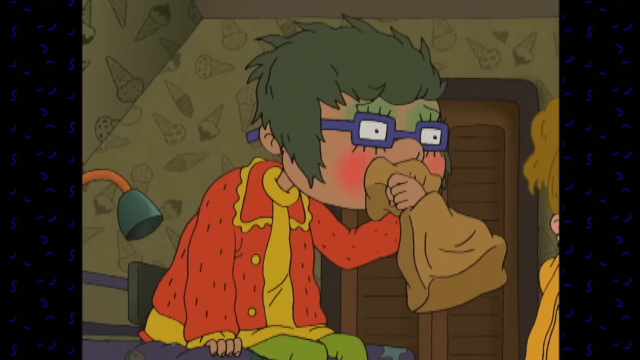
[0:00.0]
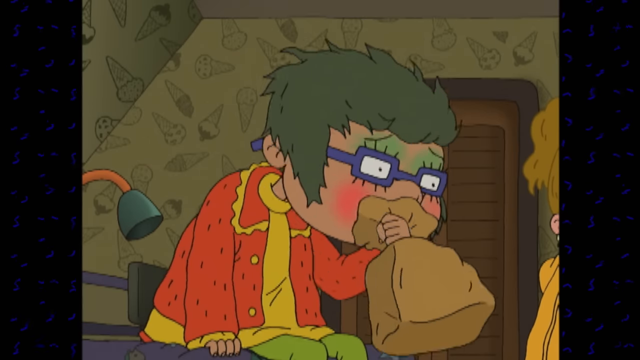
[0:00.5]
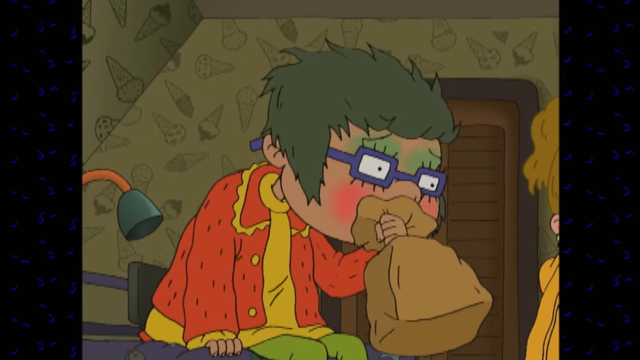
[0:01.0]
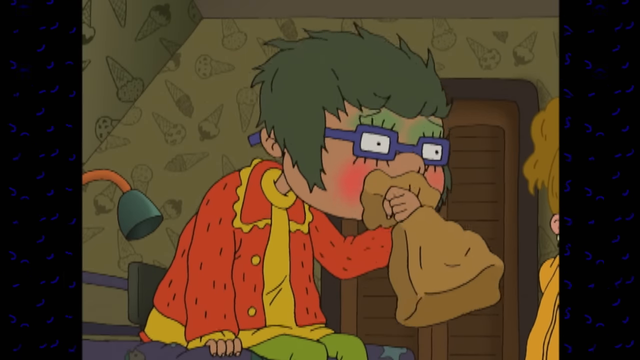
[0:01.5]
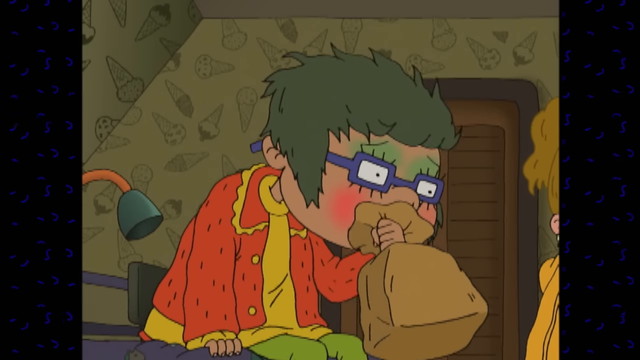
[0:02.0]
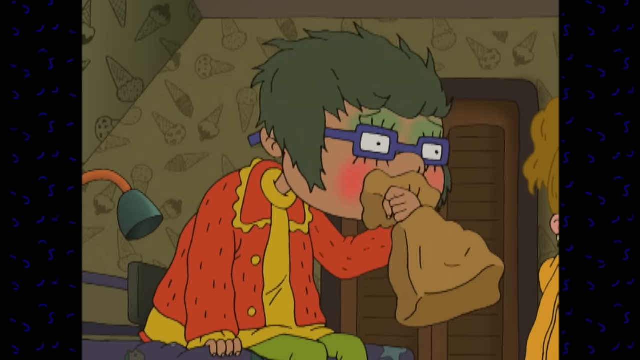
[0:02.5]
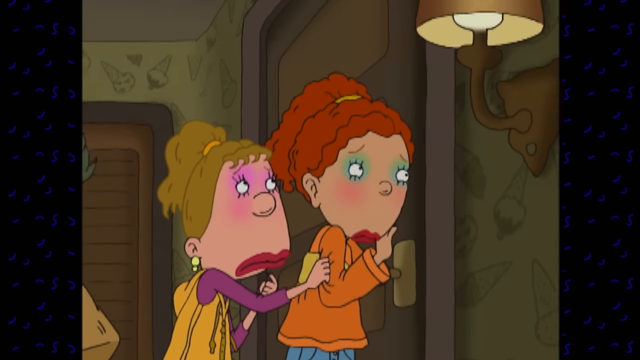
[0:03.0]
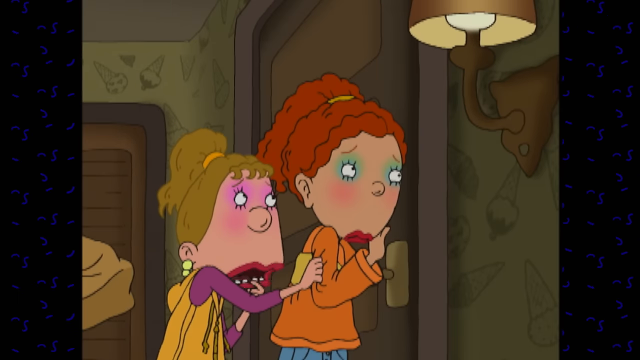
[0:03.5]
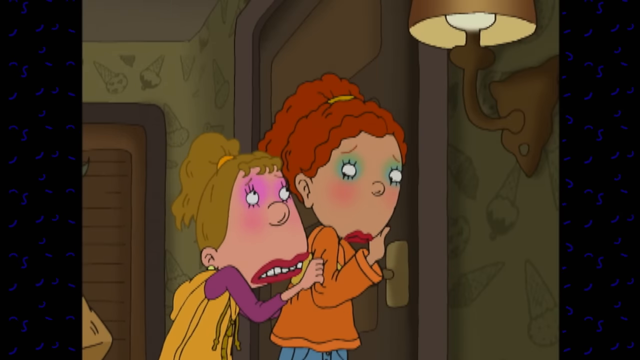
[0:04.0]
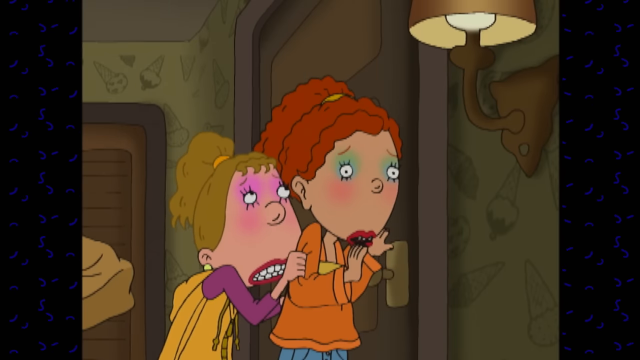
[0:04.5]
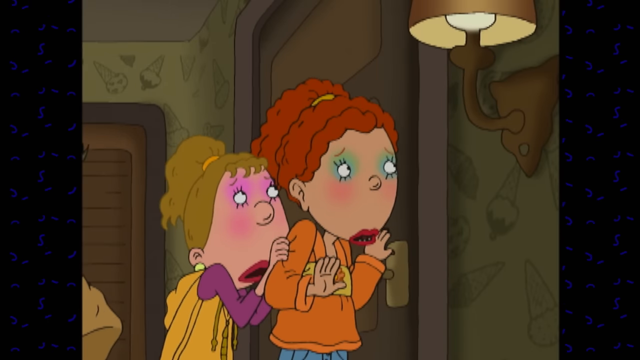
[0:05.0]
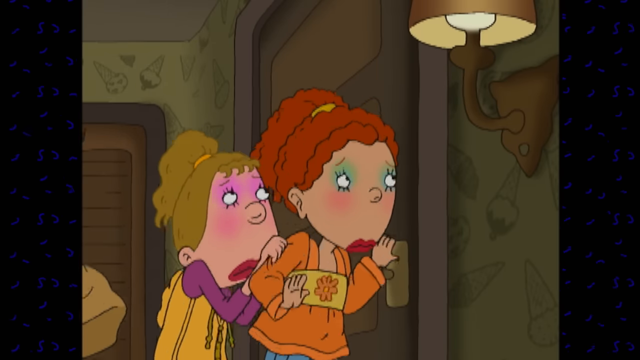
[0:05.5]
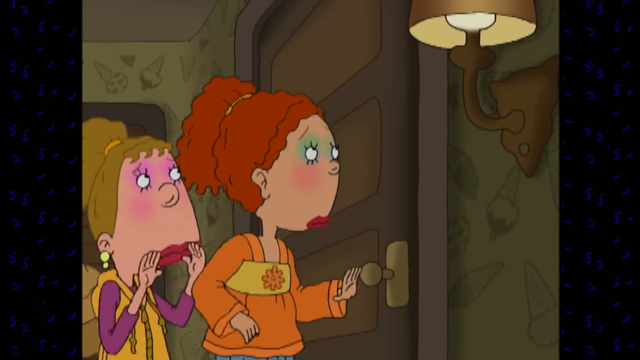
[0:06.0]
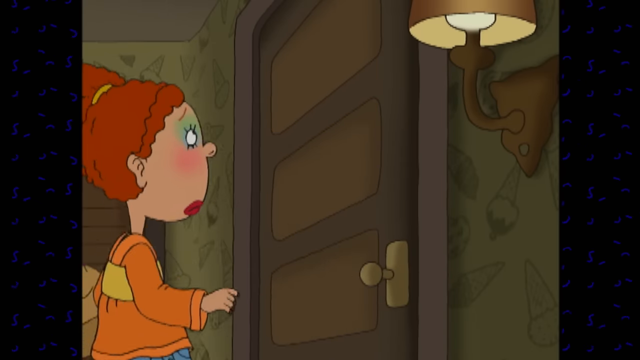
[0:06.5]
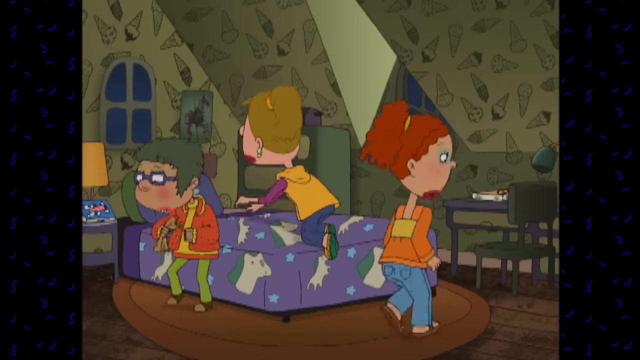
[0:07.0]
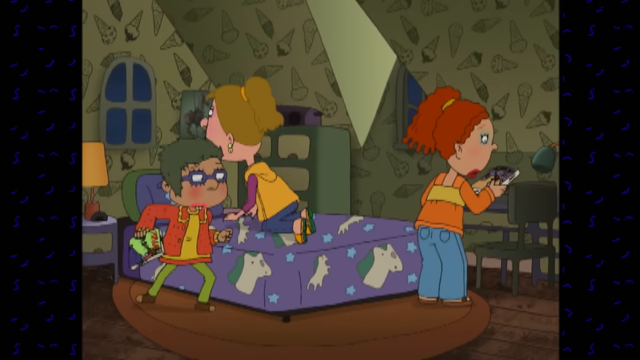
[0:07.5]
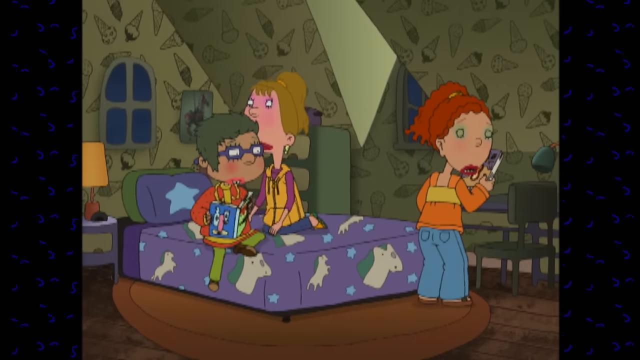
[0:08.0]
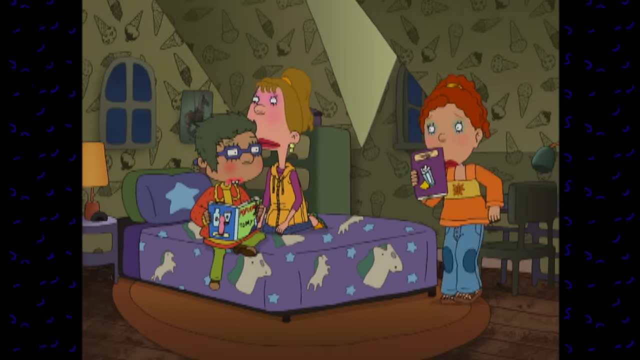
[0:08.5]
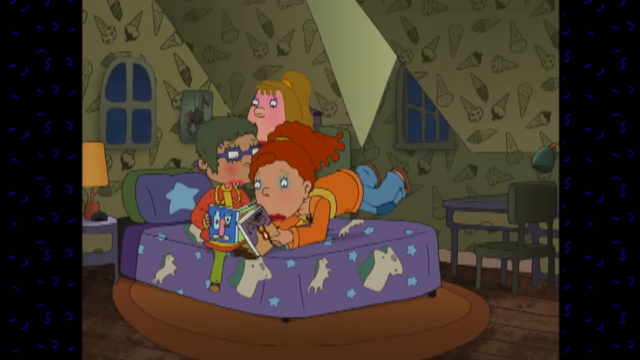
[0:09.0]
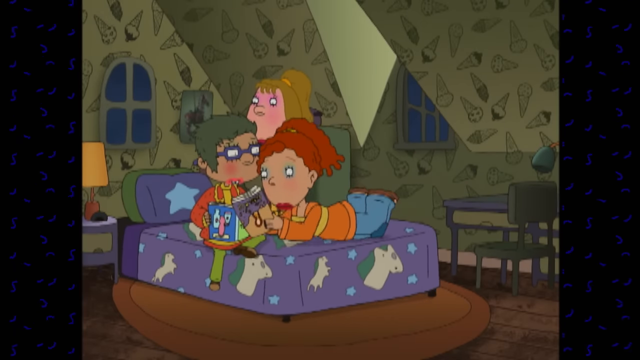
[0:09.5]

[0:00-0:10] A cartoon character with gray hair and red pajamas is holding a paper bag and seems to be sick. Two other characters, both female, are with this character, one with red hair and the other with blonde, golden hair. The three of them are together in one room; they go away from the door to the bed, get on the bed, and play on it, reading a book.